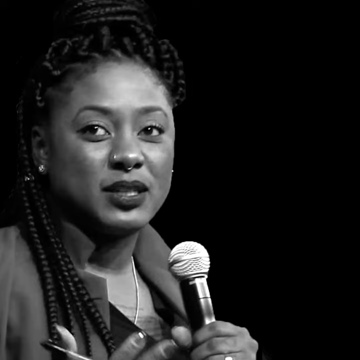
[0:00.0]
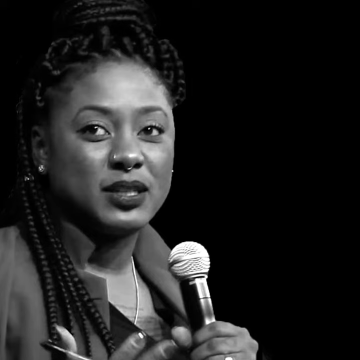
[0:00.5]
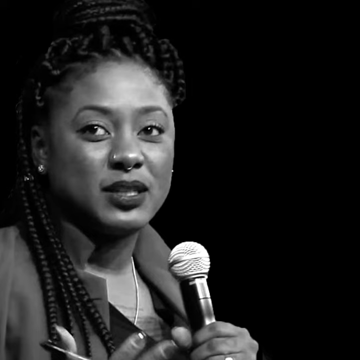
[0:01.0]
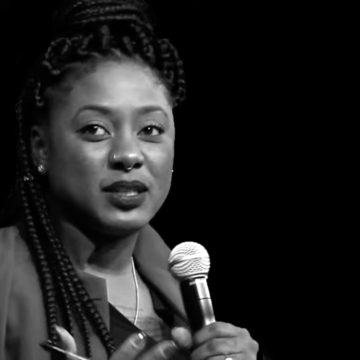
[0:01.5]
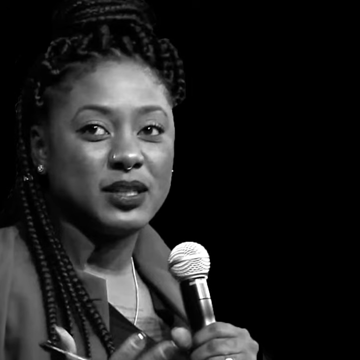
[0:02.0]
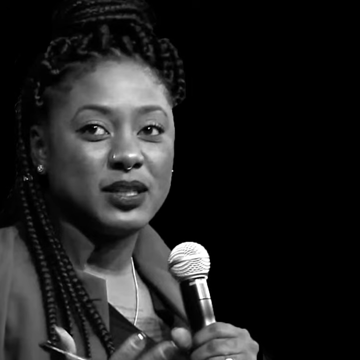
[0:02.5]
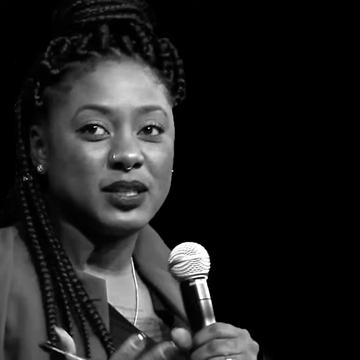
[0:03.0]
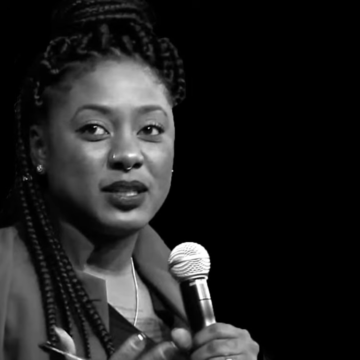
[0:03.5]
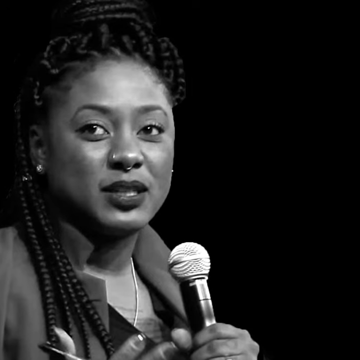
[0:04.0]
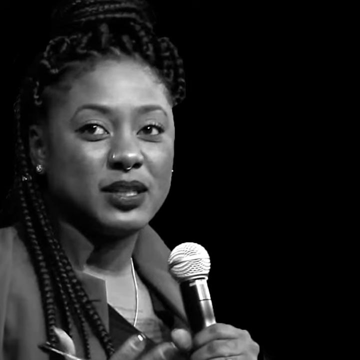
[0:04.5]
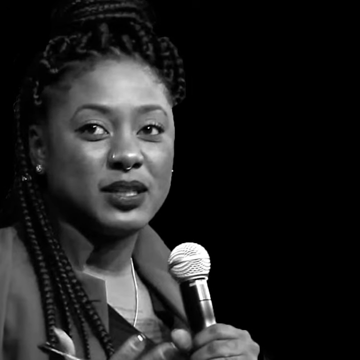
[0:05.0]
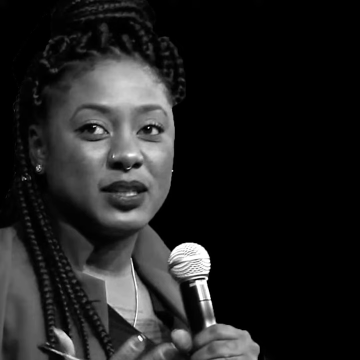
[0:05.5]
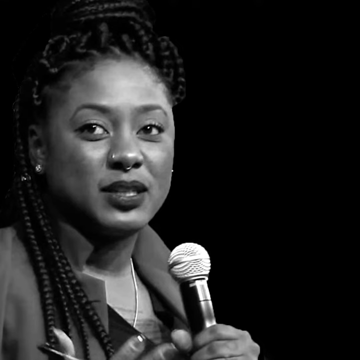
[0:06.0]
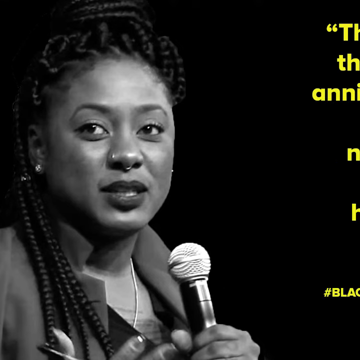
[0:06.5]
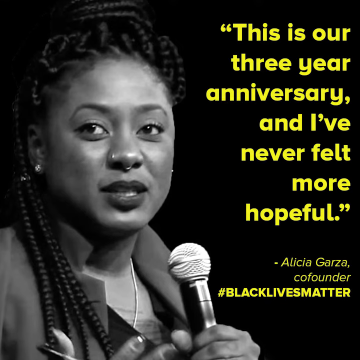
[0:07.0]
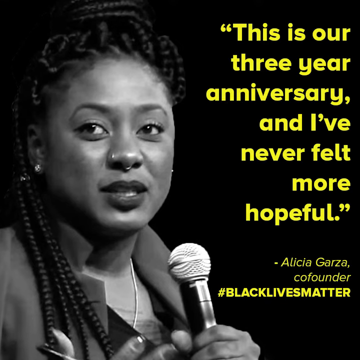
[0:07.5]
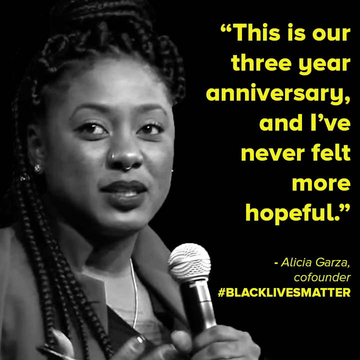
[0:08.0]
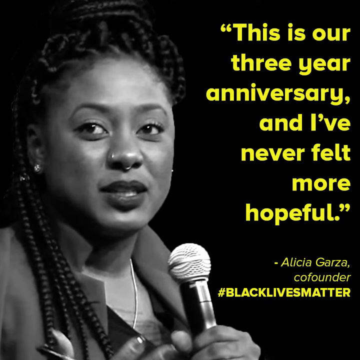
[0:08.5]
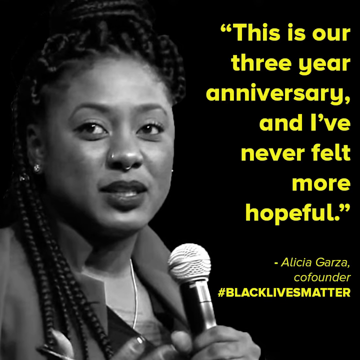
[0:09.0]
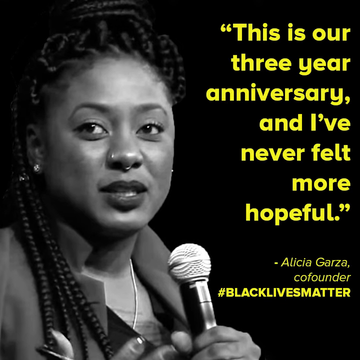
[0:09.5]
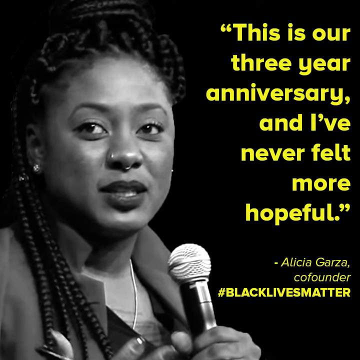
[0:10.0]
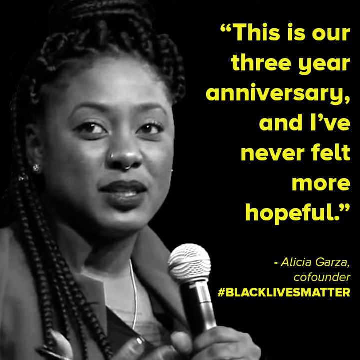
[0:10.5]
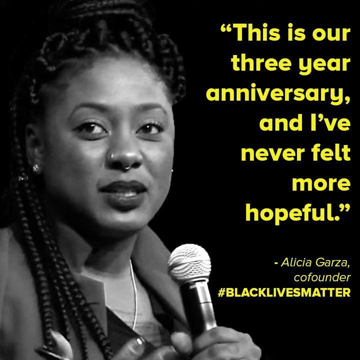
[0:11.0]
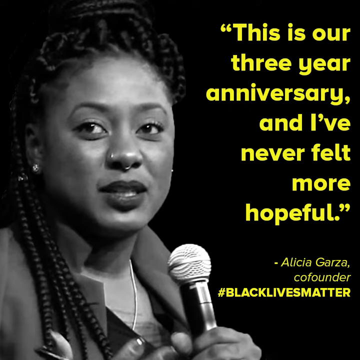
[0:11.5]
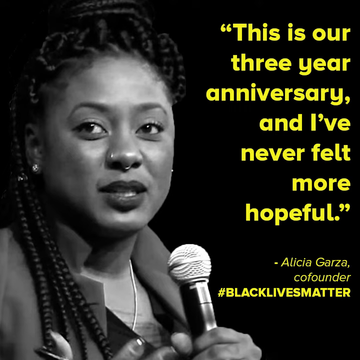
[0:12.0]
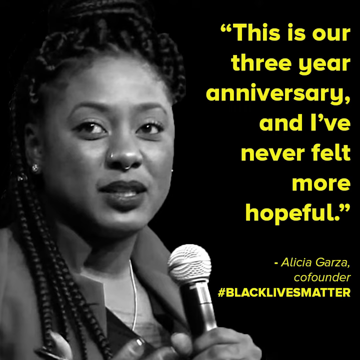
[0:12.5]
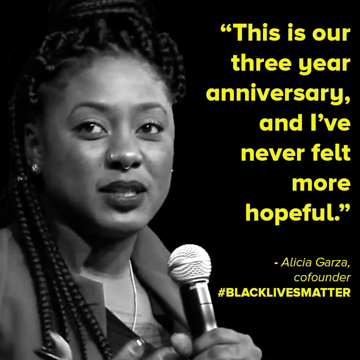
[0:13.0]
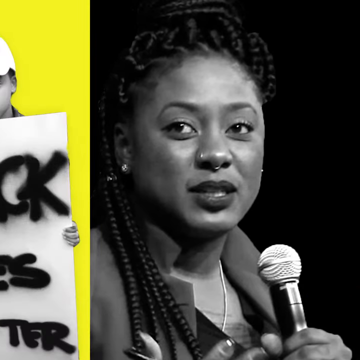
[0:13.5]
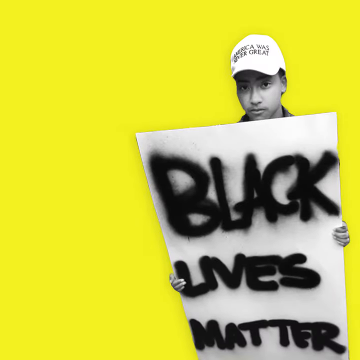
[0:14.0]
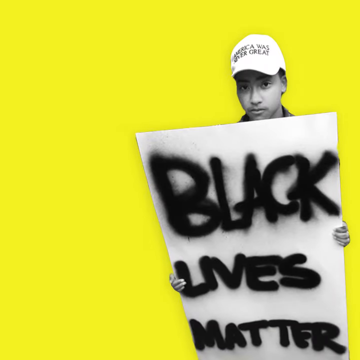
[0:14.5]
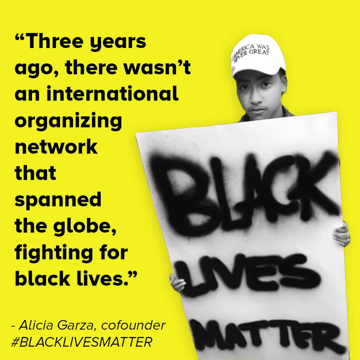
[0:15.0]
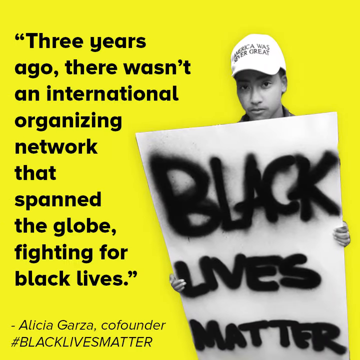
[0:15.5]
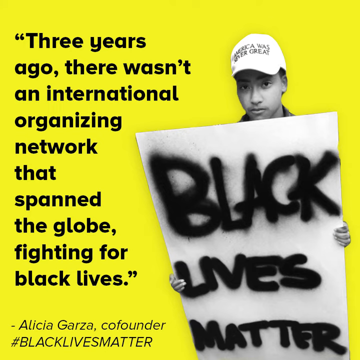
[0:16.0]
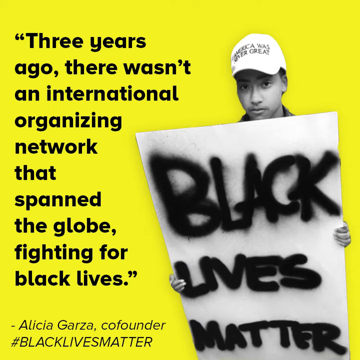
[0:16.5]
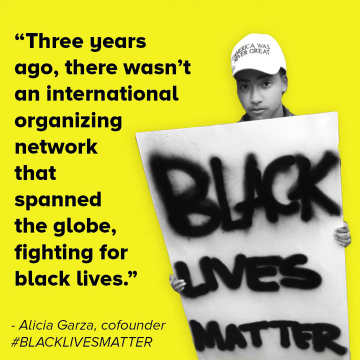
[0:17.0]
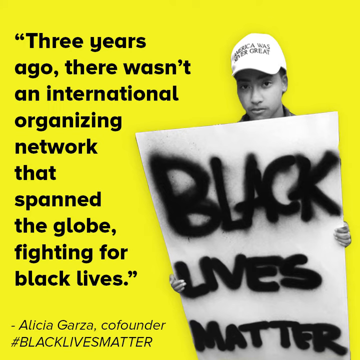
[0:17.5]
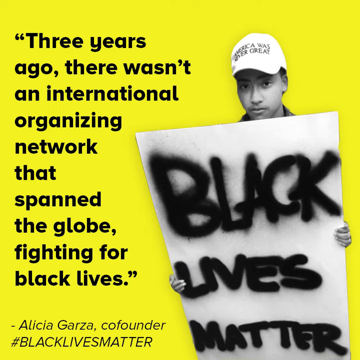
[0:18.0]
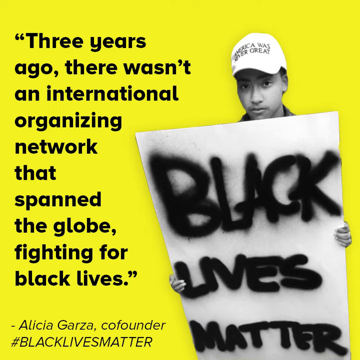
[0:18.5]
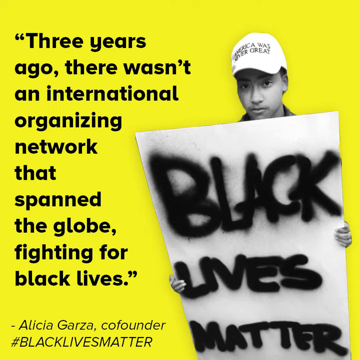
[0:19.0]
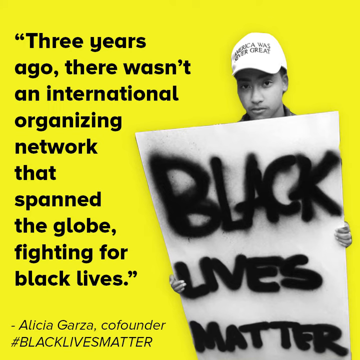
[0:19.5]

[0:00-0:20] A black and white photo shows an African American woman holding a microphone, with long braids, earrings, a nose ring, and a septum piercing. A quote then appears to the right of her on the black background in yellow: "This is our three year anniversary and I've never felt more hopeful." It is attributed to Alicia Garza, co-founder of Black Lives Matter. The video then switches to a graphic on a yellow background of a man holding a sign that says "Black Lives Matter" and wearing a hat that says "America was never great." Black lettering over the top on the left side reads: "three years ago there was an international organizing network that spanned the globe fighting for black lives."